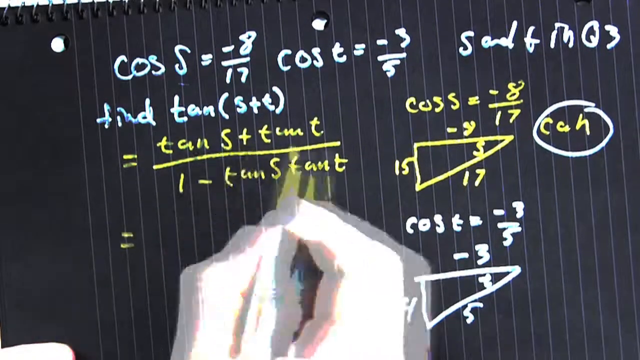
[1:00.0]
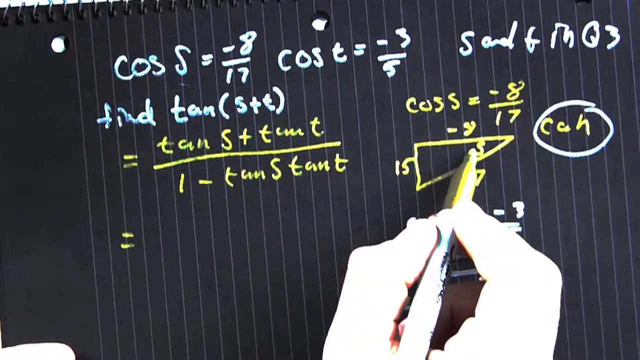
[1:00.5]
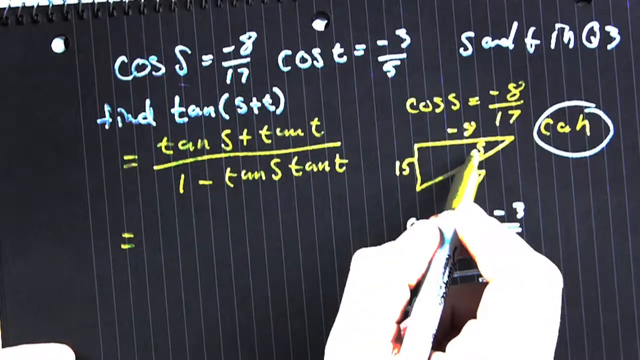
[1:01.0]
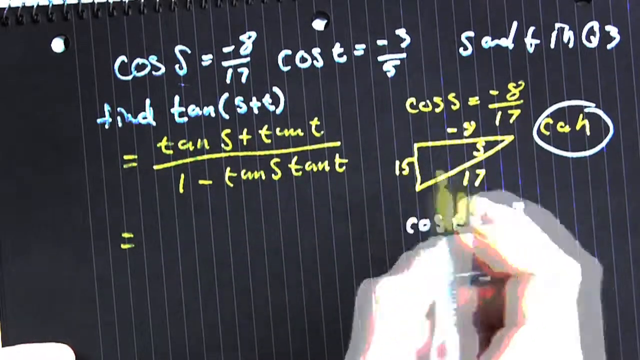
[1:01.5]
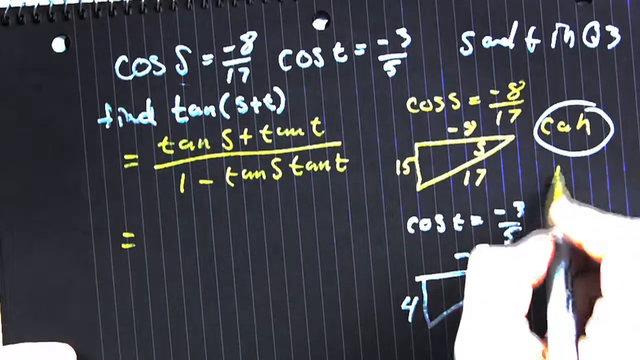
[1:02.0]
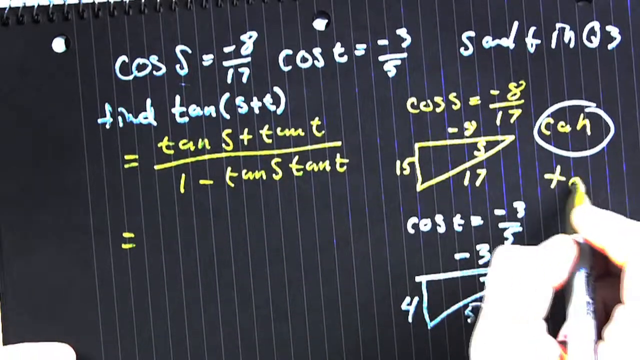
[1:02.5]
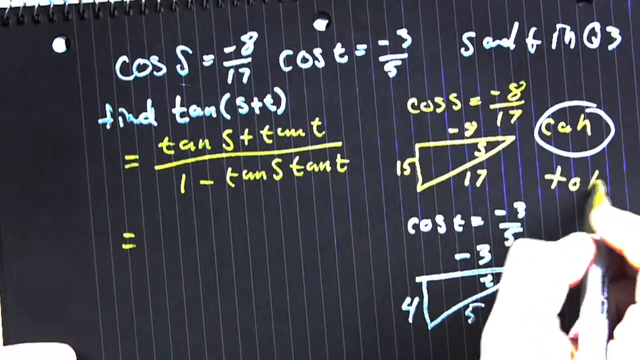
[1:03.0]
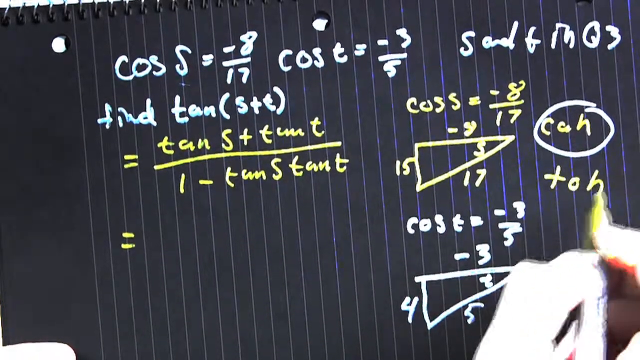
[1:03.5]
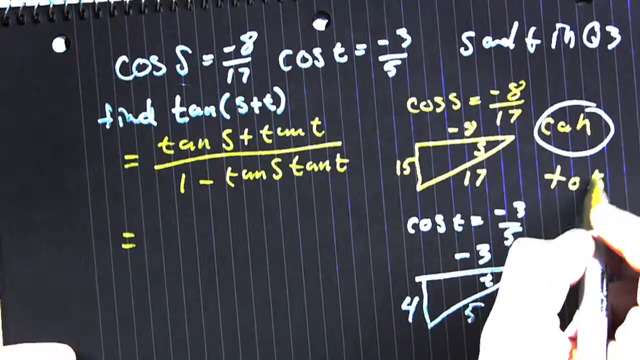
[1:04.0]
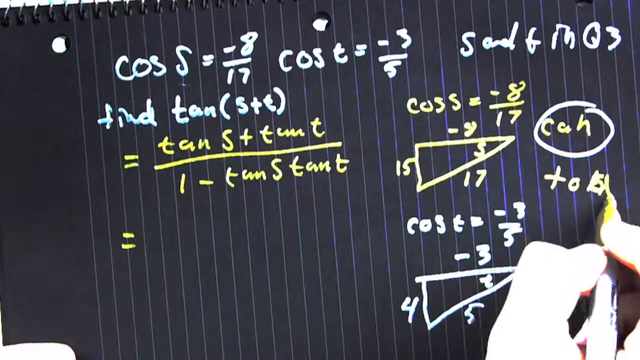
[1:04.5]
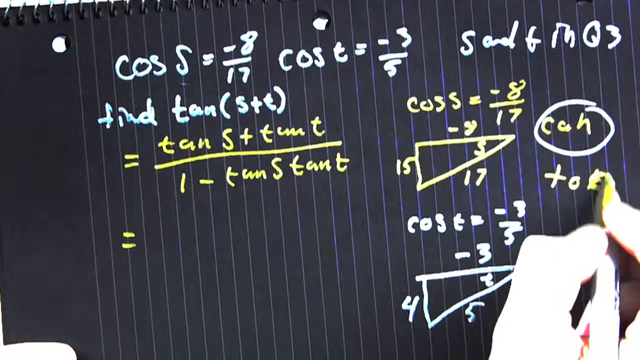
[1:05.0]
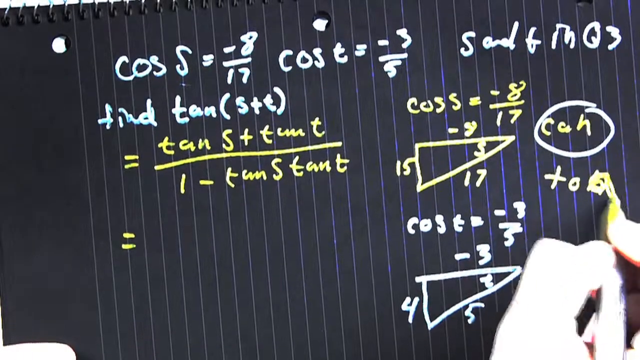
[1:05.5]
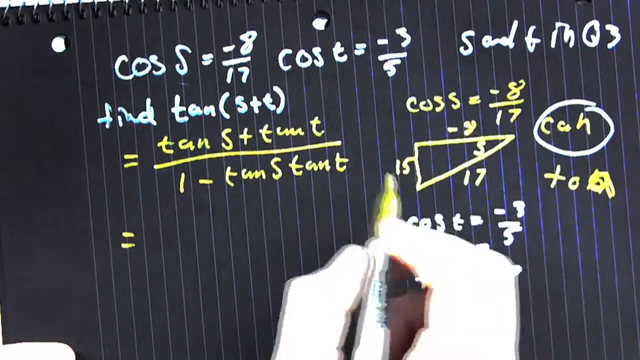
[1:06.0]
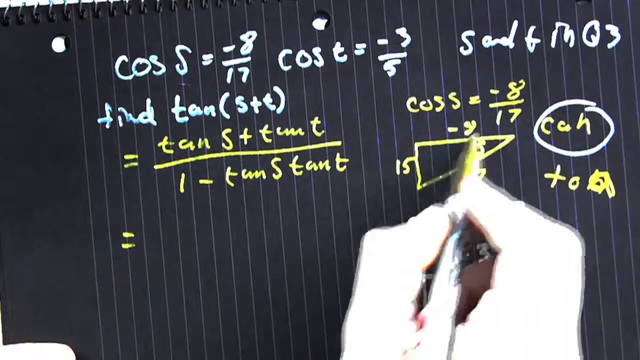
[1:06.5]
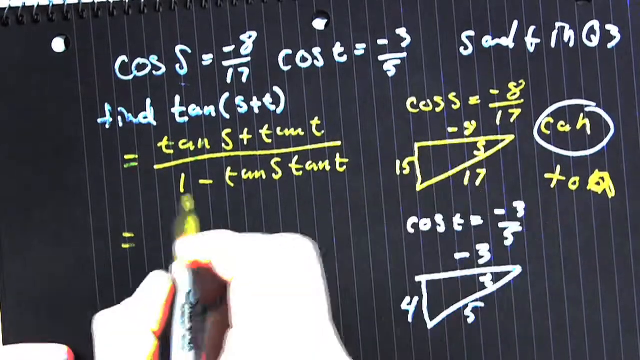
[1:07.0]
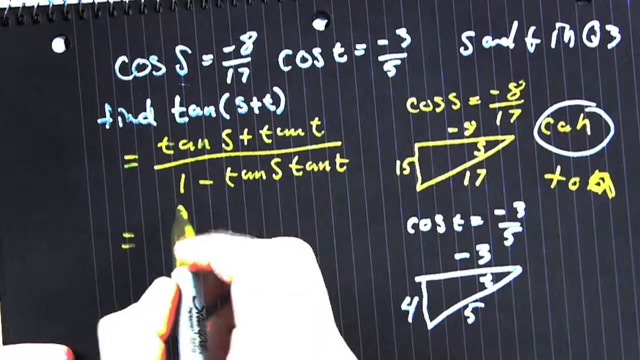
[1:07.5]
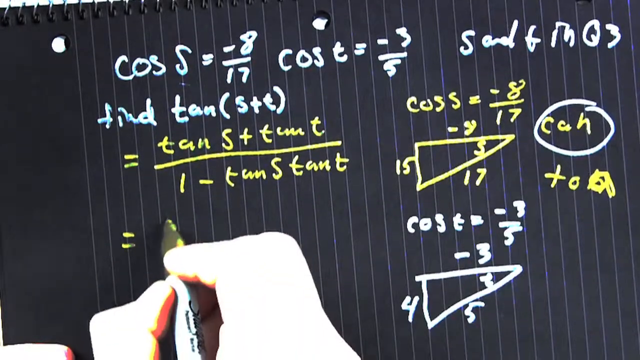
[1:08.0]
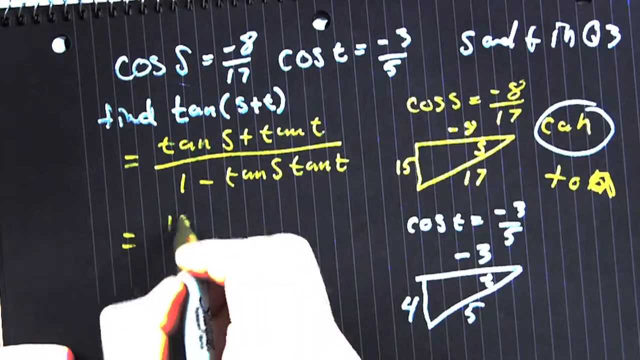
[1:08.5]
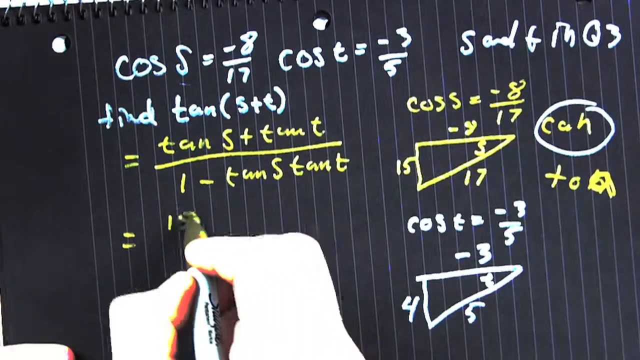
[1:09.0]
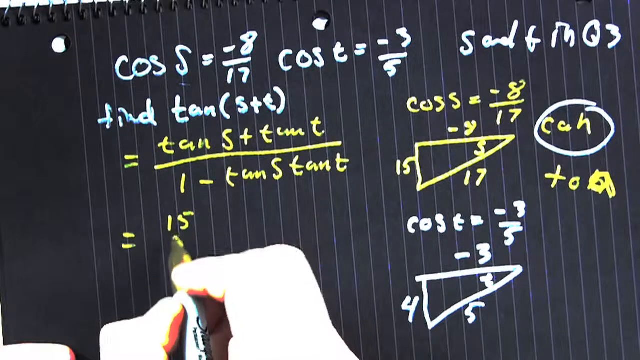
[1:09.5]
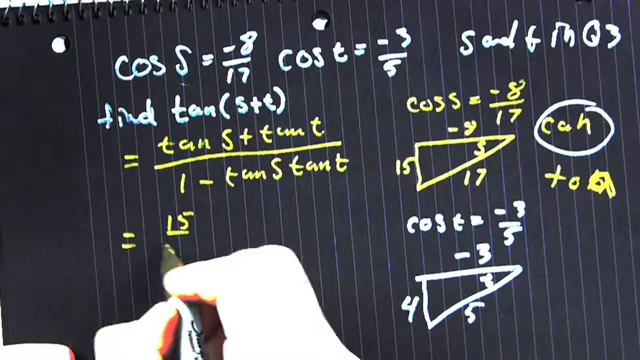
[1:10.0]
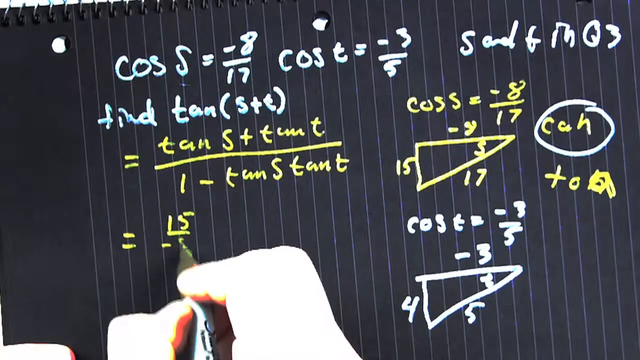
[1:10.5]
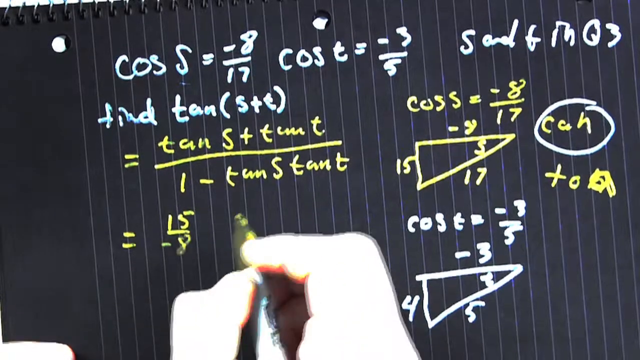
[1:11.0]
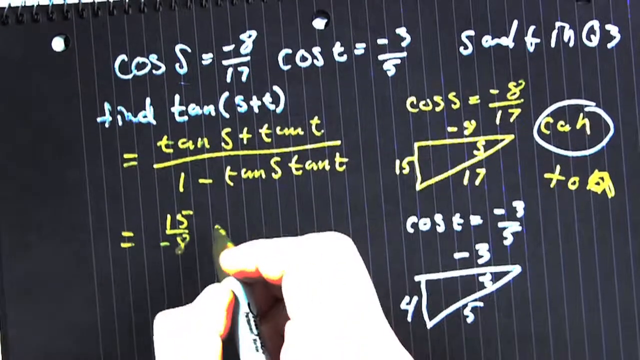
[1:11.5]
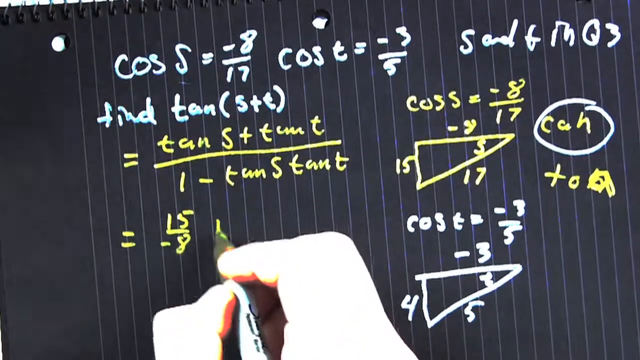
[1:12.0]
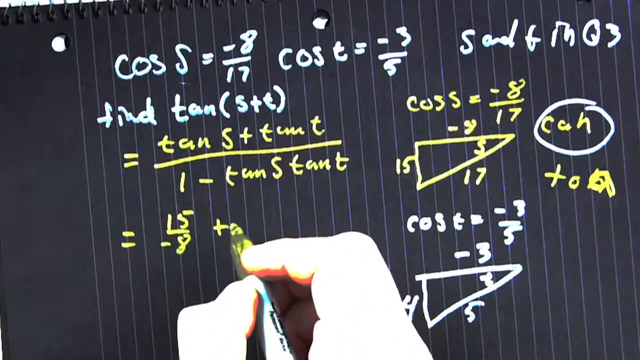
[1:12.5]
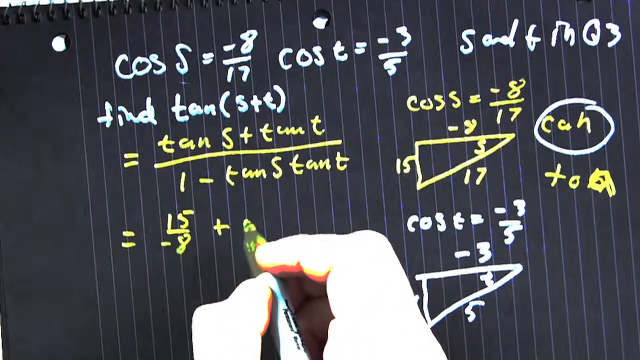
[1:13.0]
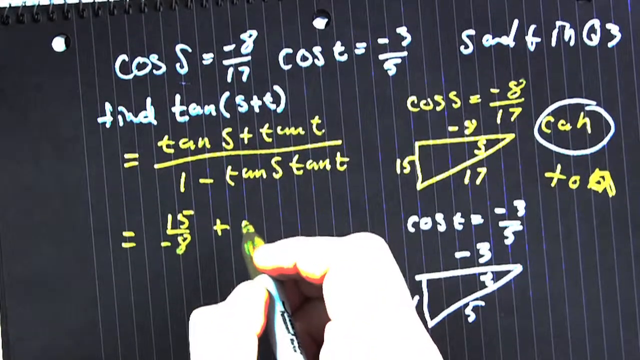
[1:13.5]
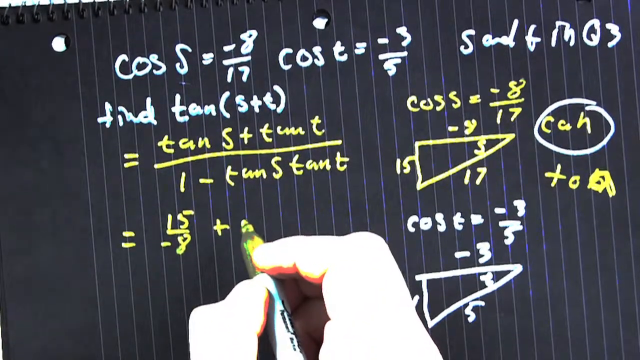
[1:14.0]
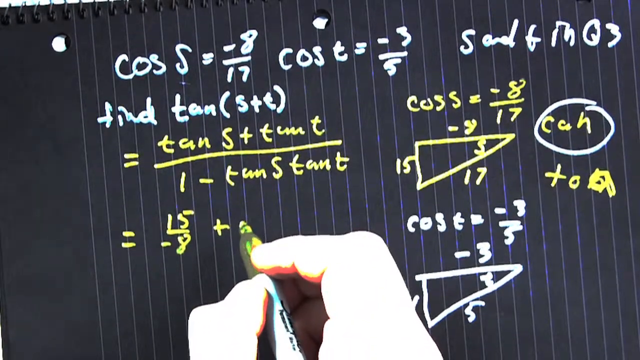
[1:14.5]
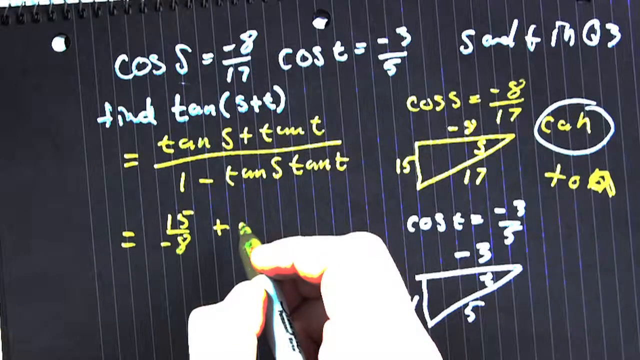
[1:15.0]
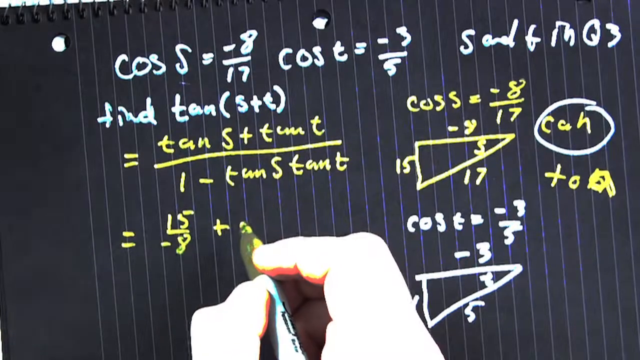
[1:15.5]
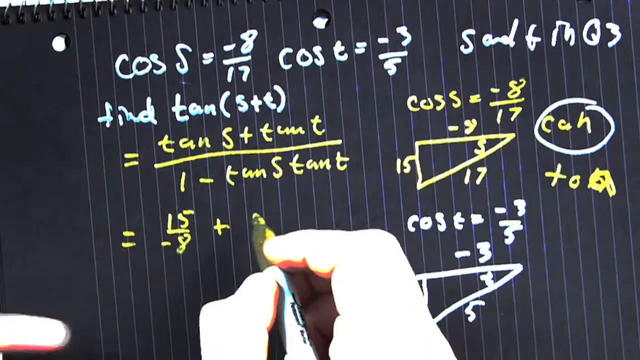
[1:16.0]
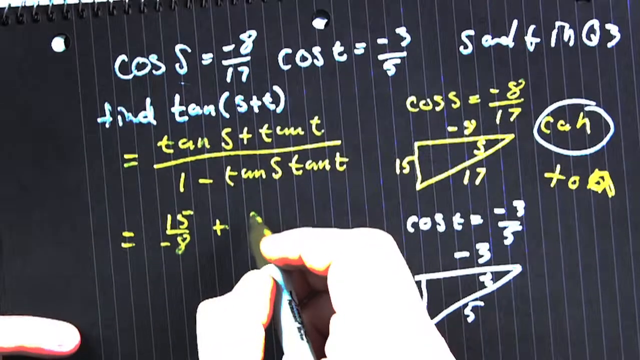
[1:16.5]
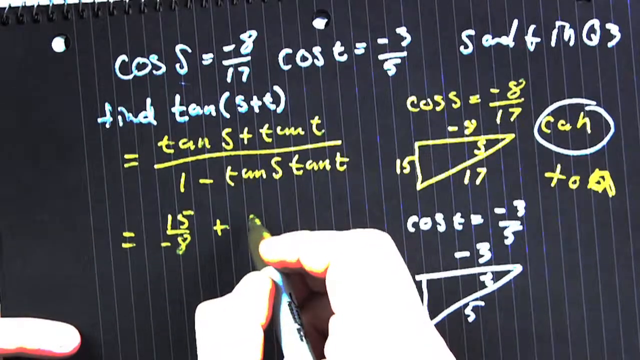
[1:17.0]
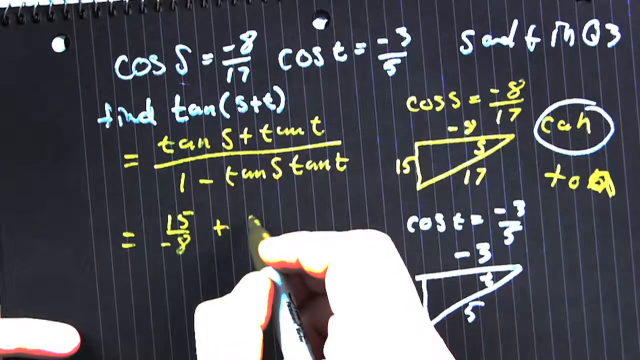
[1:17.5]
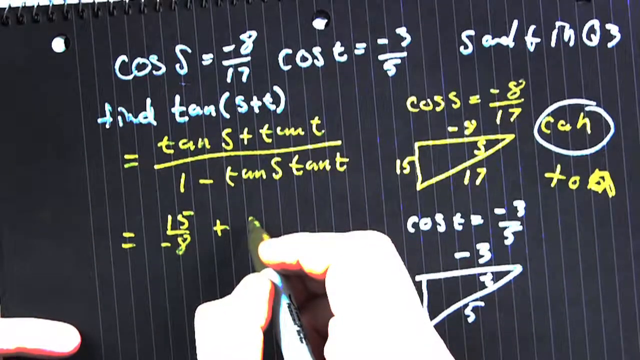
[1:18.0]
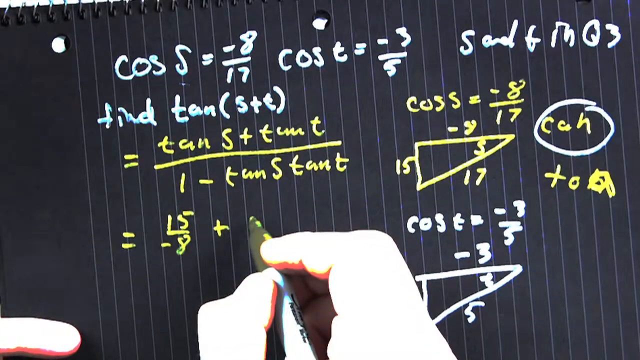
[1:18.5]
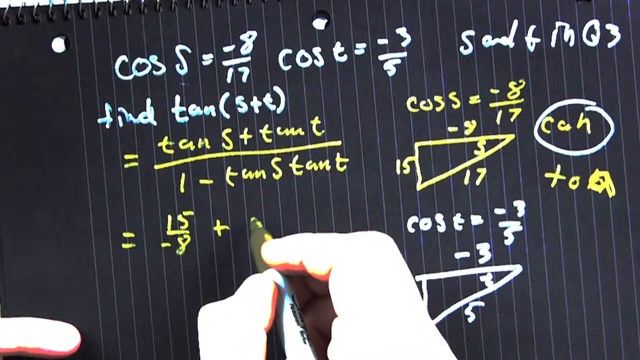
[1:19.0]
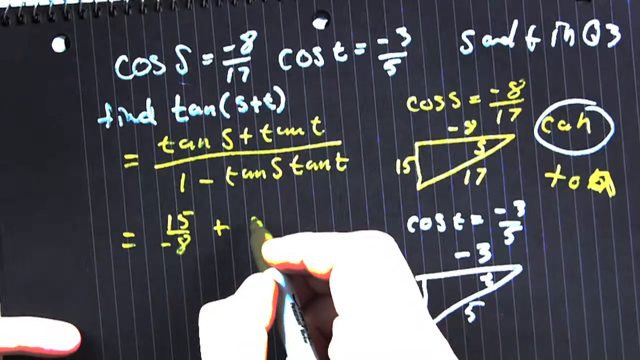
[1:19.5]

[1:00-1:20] The black sheet of paper with some holes is shown again, with the same white and yellow markers. The man works through the task of finding the tangent of S plus T, writing the next steps on the sheet: "15 to minus 8 plus...", ending with a short formula. He also writes something else on the paper that is hard to make out. The same paper, the same marker and the same hand of the person are visible.